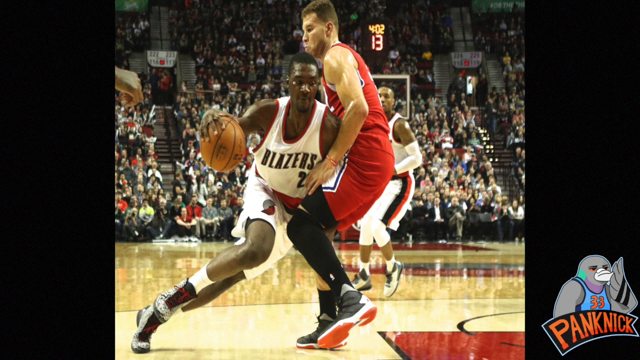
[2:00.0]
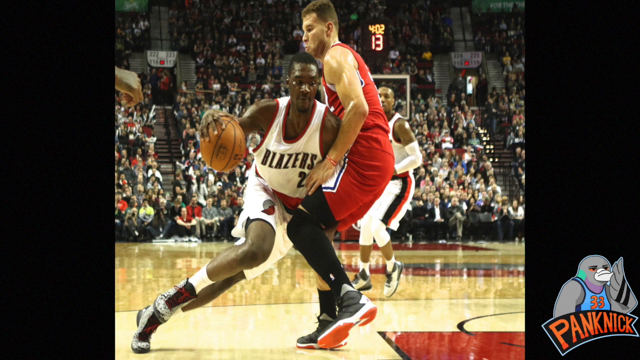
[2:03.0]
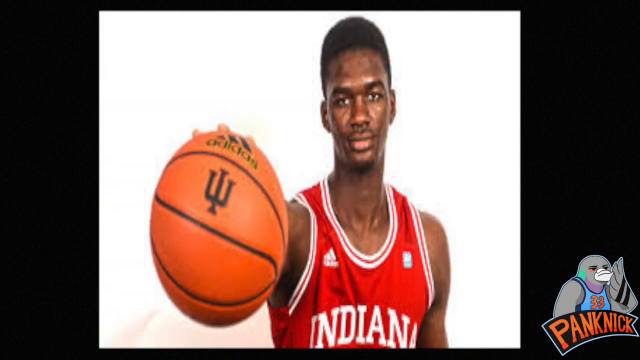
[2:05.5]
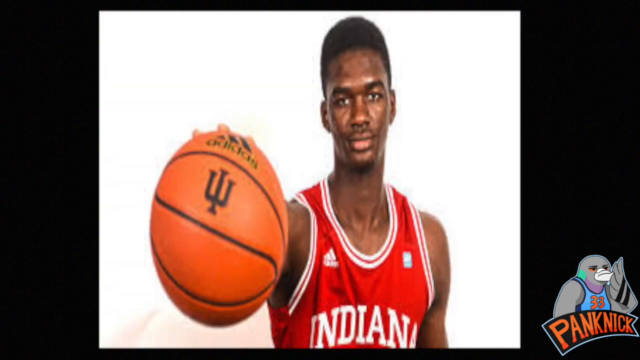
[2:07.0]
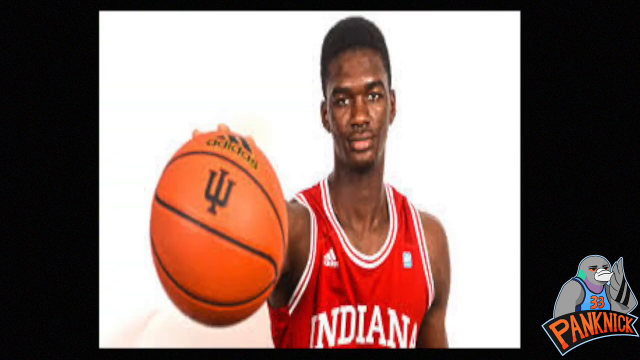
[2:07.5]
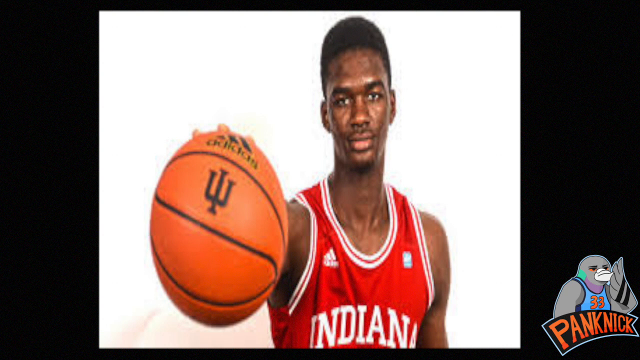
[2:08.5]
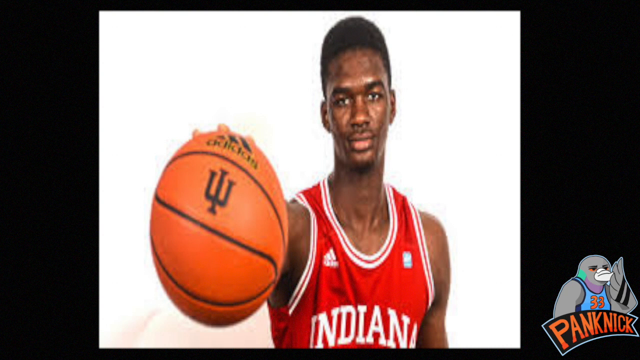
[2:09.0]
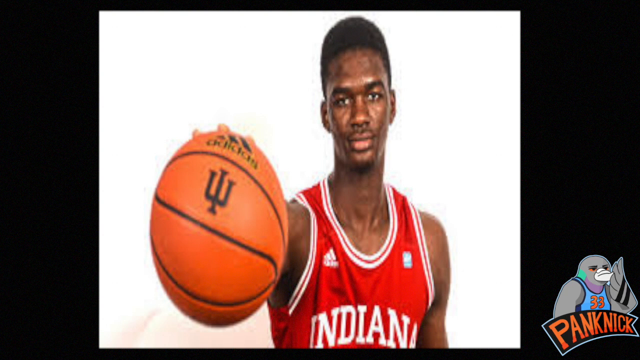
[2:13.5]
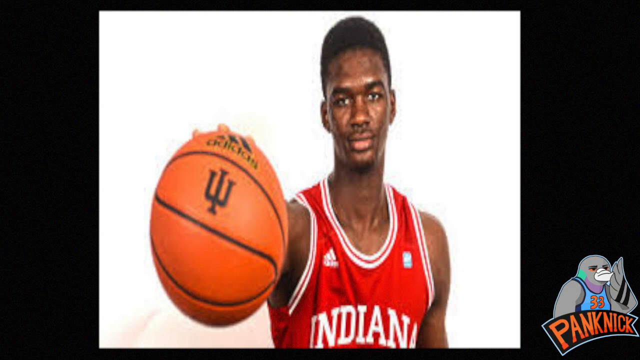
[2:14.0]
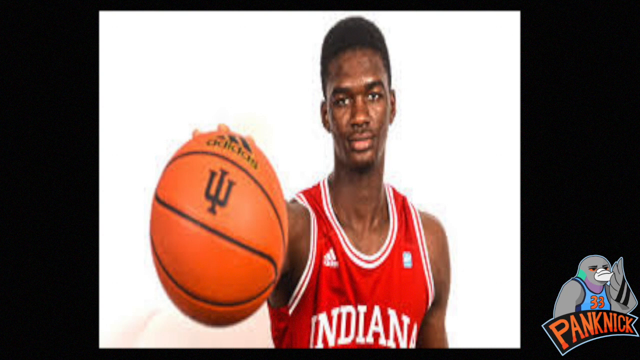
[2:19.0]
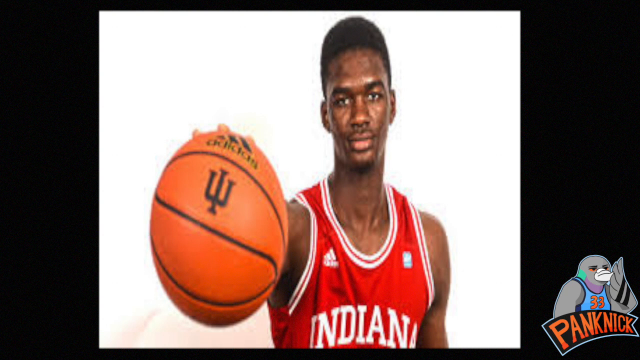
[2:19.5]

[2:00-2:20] An NBA player in a white jersey that says "Blazers" has the ball. It then cuts to another basketball player in a white jersey with the letters "Indiana" on the front in white and white trim on the rest of the jersey. His right arm is extended, gripping an orange basketball that seems to have an Adidas logo on it, plus a black mark that looks kind of like a candle. The background behind the player is white. He has a goatee and short black hair. The picture seems cropped, with a black background on the left and right sides of the screen. In the lower right is a gray pigeon in a light blue jersey with the number 33 in orange, and in front of the pigeon text reading like "Panic" with the "Nick" spelled with a K, in orange on a black background with a blue border.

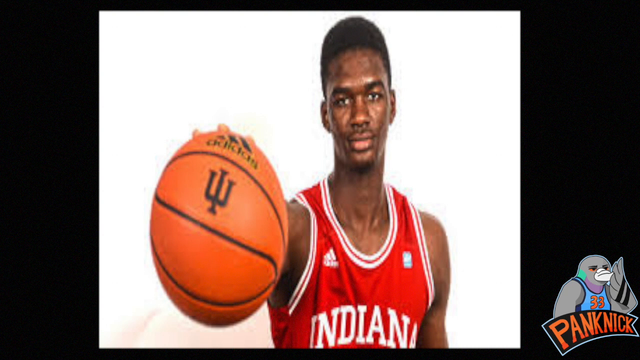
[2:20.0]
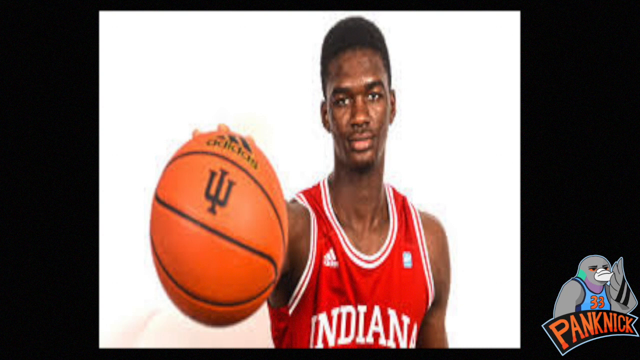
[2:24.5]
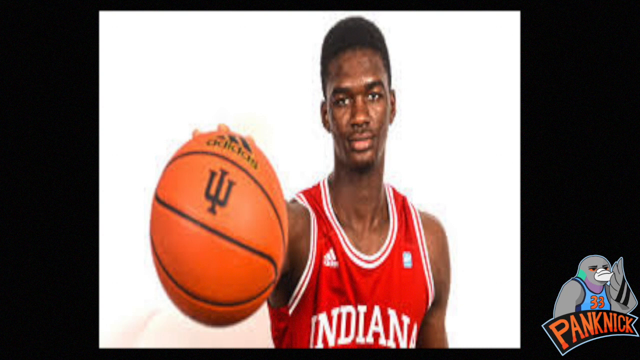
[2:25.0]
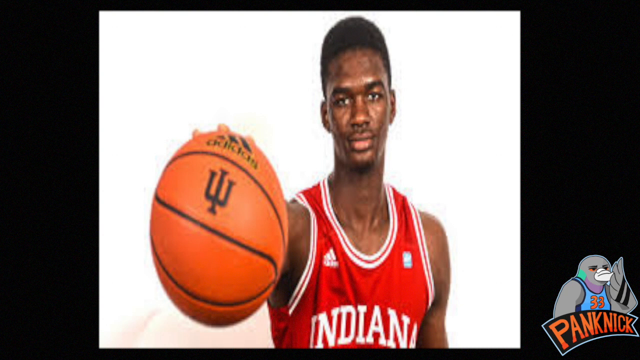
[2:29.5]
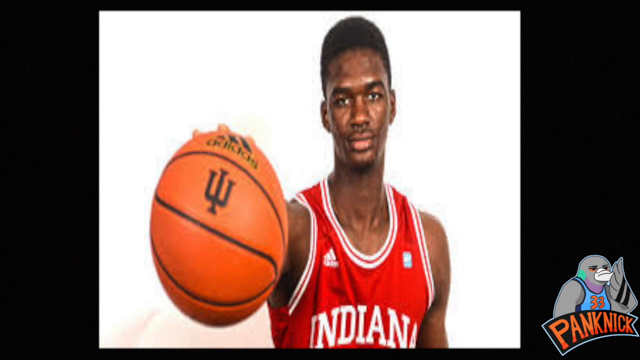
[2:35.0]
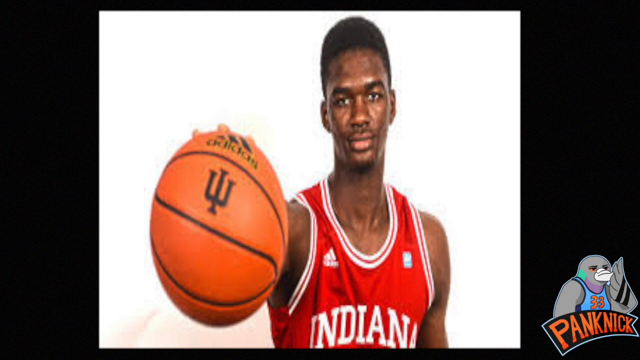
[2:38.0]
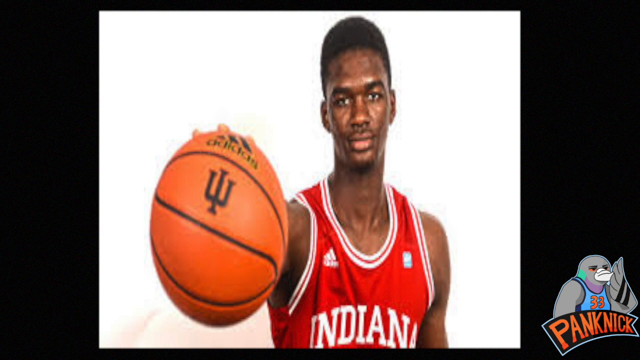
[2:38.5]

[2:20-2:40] A basketball player wears a red jersey with white trim and white text reading "Indiana", along with a white Adidas logo. His right arm is extended, gripping an orange basketball with black lines, an Adidas logo, and a black mark that kind of looks like a candle holder. The background behind the player is white, and the picture seems cropped on the left and right sides, where the background is black. On the lower right side is a gray pigeon in a light blue jersey with the number 33 in orange, and in front of it text reading like "panic", with a K before the "nic" part, on a black background with a blue border.